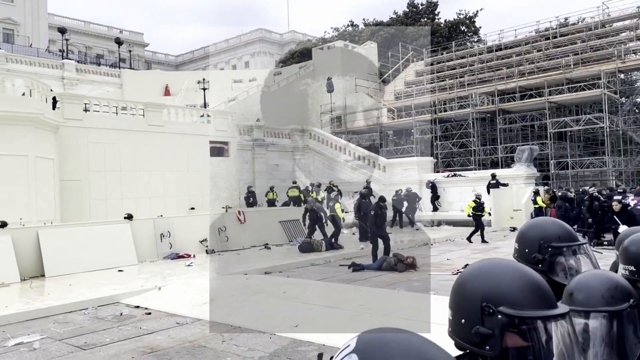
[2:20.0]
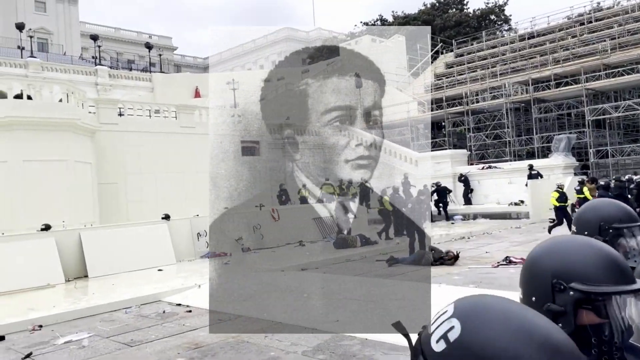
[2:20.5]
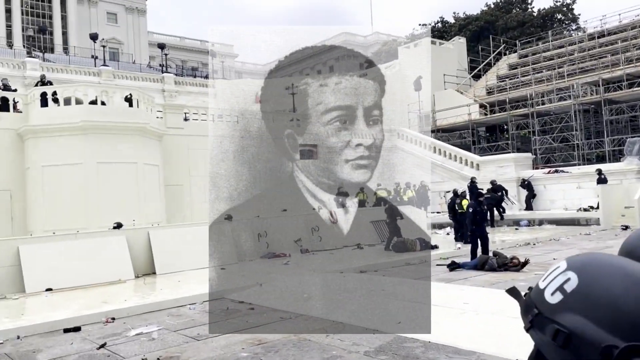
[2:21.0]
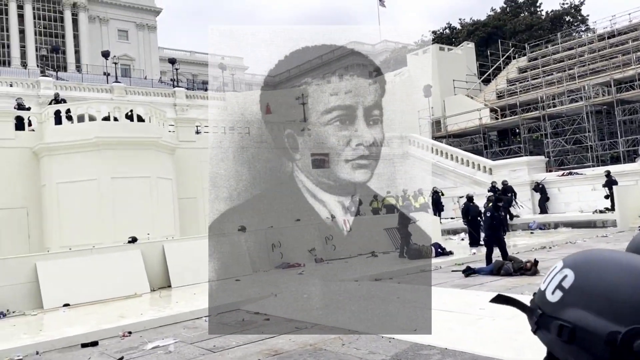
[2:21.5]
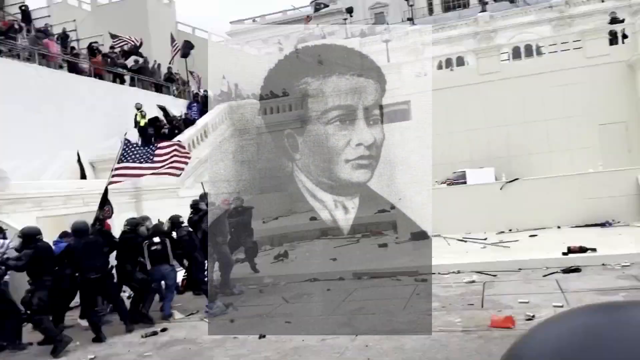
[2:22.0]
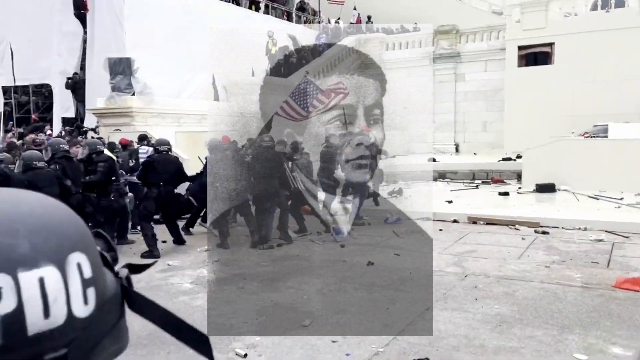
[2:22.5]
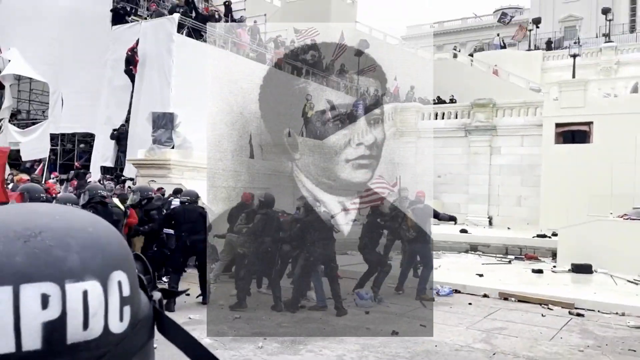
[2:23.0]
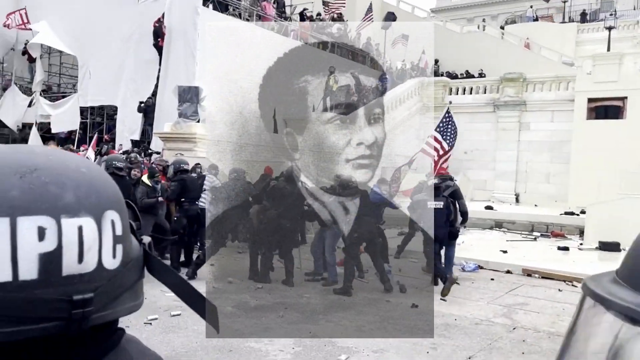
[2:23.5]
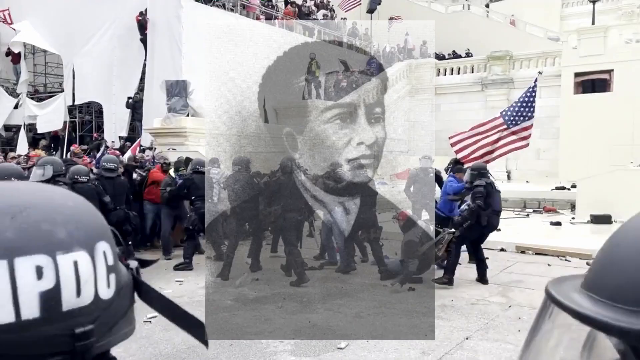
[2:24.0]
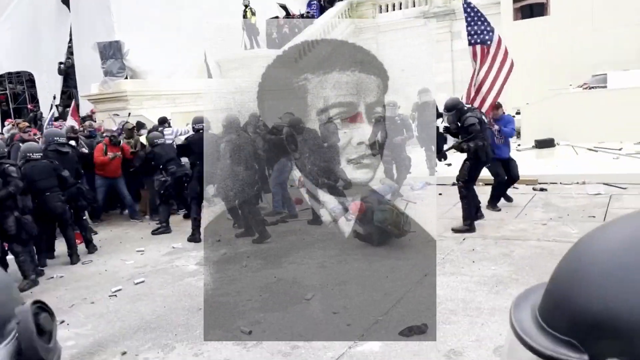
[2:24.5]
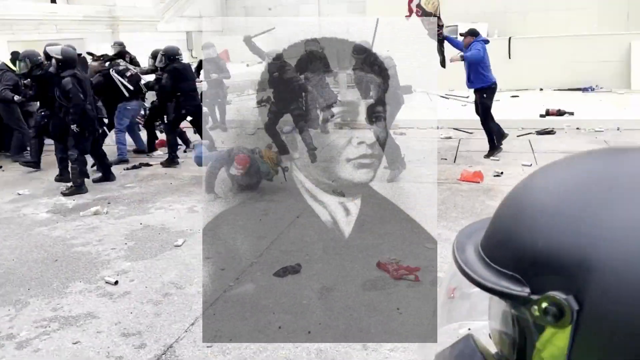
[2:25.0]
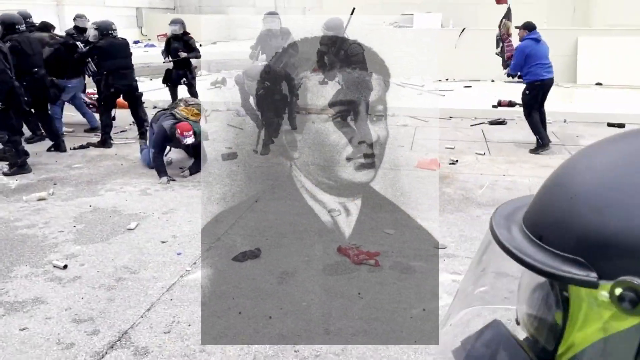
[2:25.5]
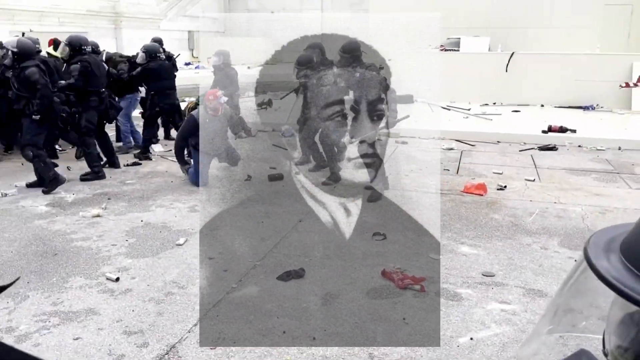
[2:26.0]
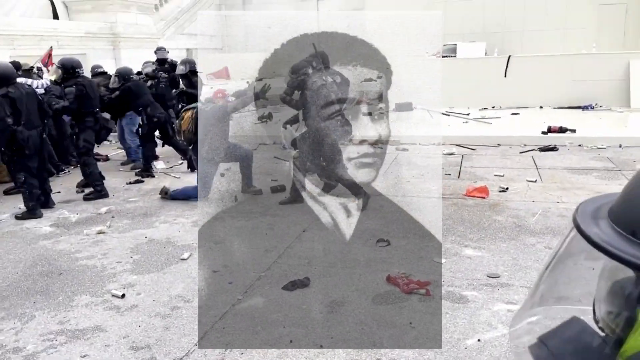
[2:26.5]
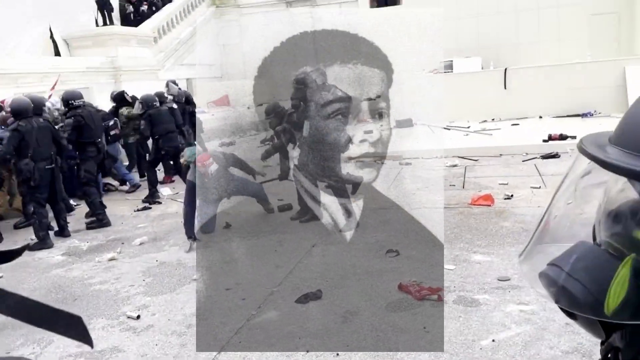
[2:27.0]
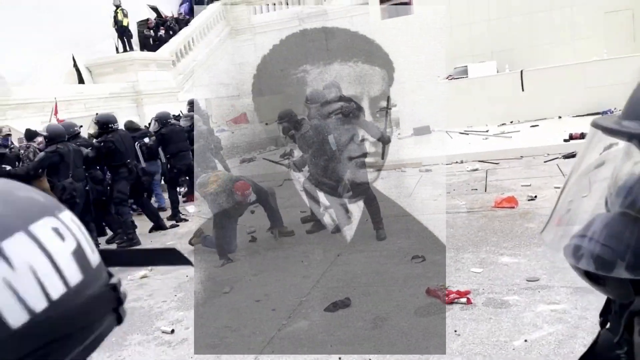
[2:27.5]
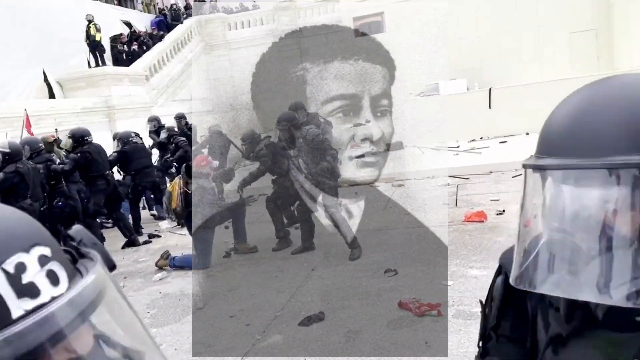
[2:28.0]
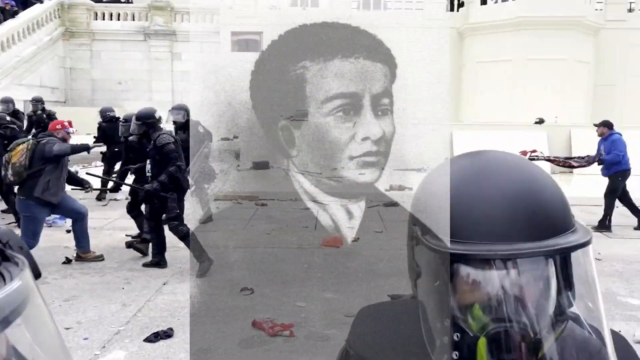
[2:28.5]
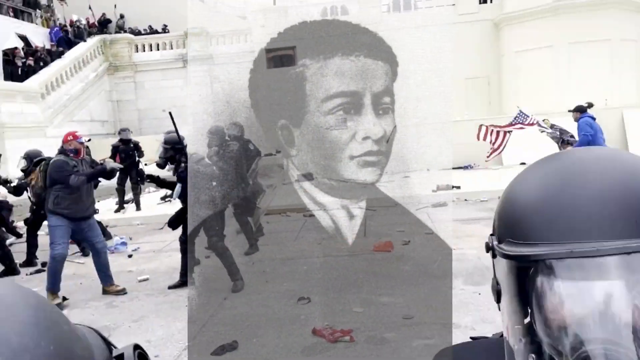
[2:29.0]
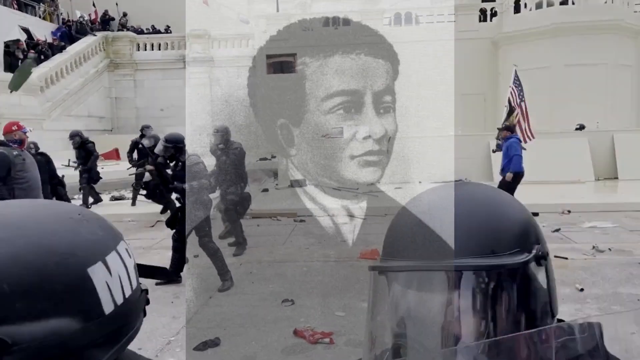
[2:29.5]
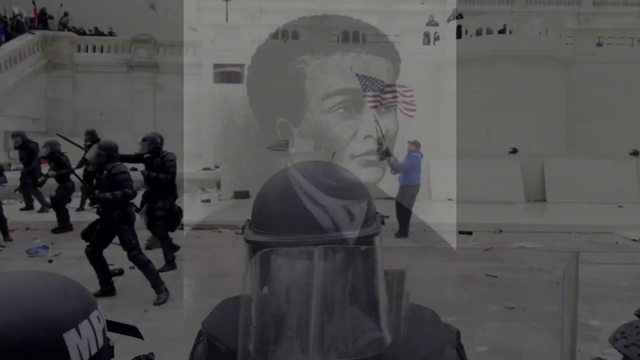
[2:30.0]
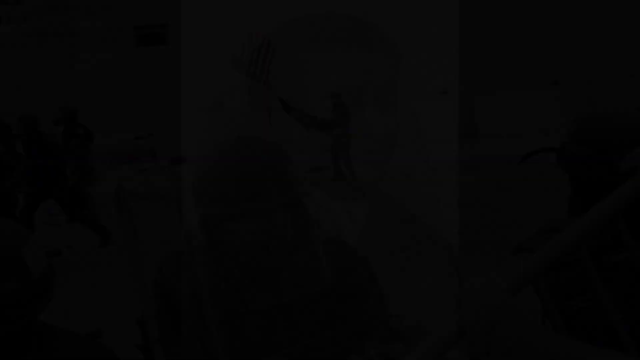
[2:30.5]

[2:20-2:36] A scene outside the federal buildings in Washington shows, just in front of some of the steps, a group of riot police in black riot uniform, helmets and truncheons. At least two people are lying on the floor, one of whom has their arms tied behind their back, with a riot police officer standing above them. A line of riot police officers in the bottom right corner of the shot appears to be trying to keep back protesters. Superimposed on the screen is a black and white photograph of Banneker when he was younger, which stays on the screen as the camera pans around to the left and shows a large group of riot police in a tussle with protesters. A man holding the flag, wearing a blue jacket and black hat, gets through. A riot police officer then hits a man on the ground several times with his truncheon; the man attempts to get up but is beaten back by another riot policeman, who hits him with his truncheon.